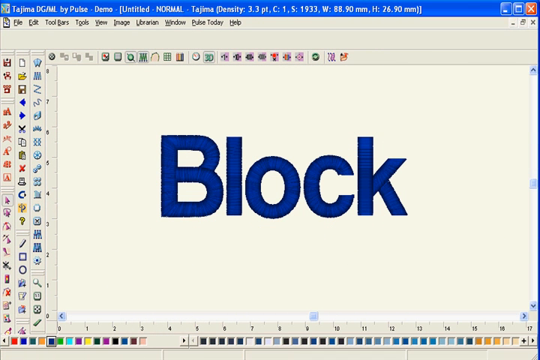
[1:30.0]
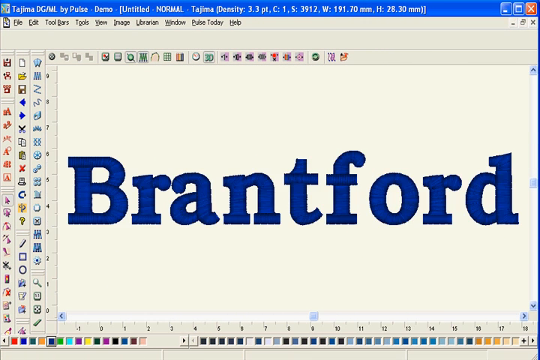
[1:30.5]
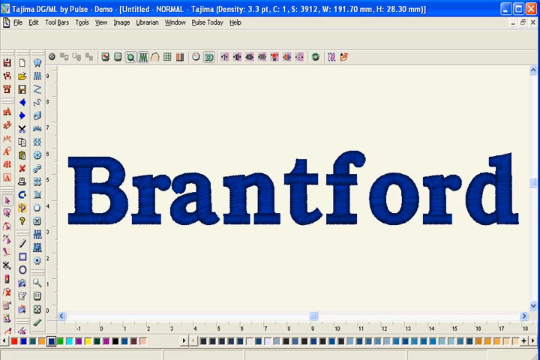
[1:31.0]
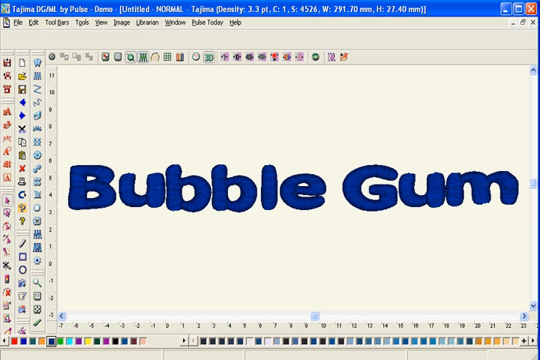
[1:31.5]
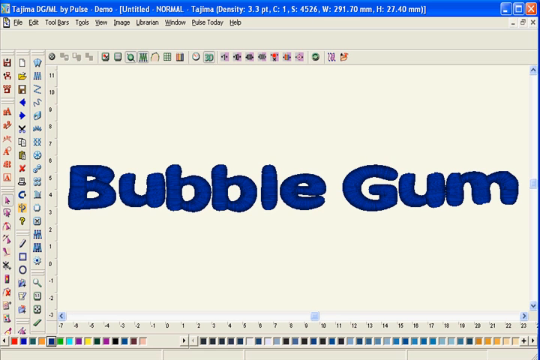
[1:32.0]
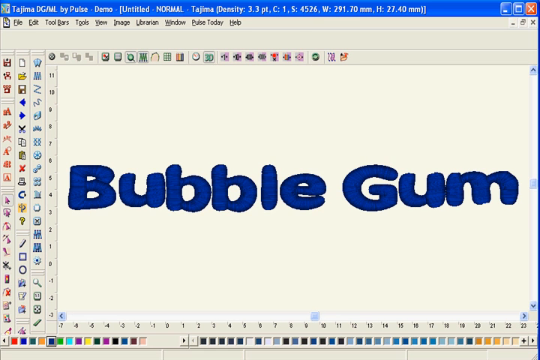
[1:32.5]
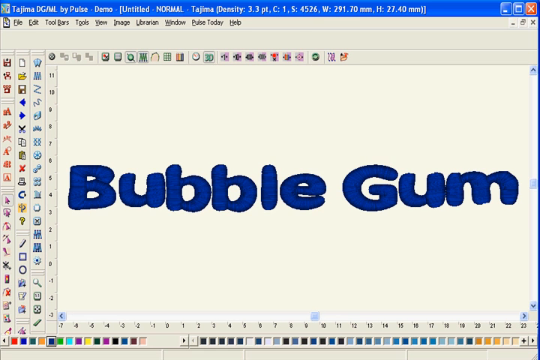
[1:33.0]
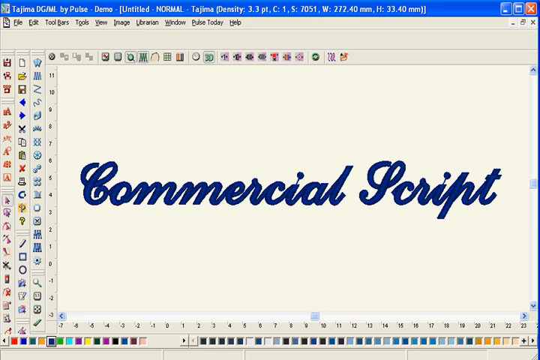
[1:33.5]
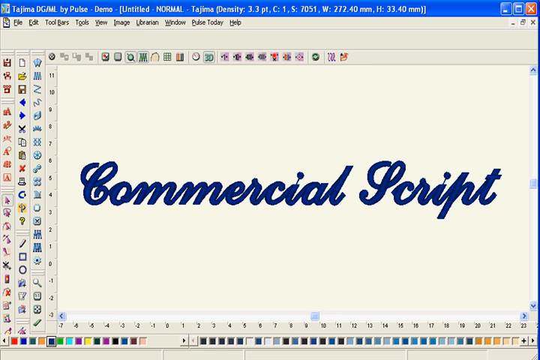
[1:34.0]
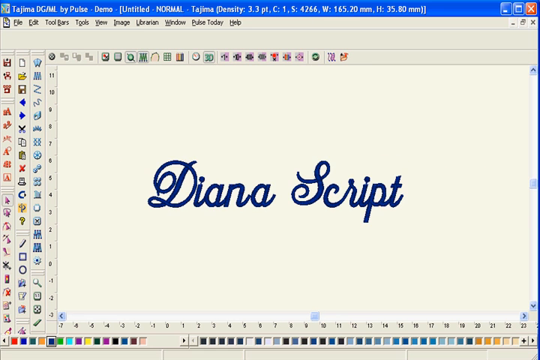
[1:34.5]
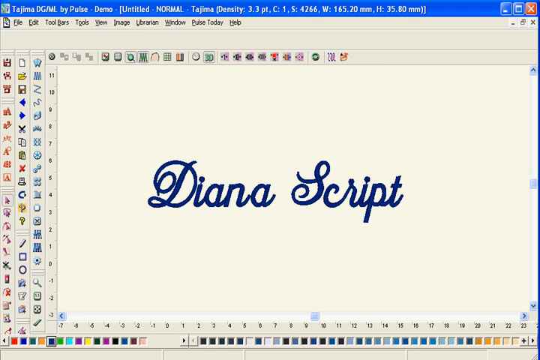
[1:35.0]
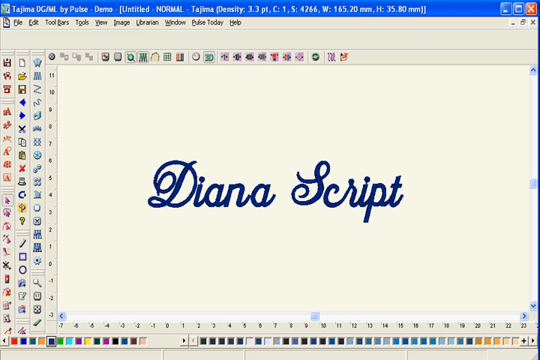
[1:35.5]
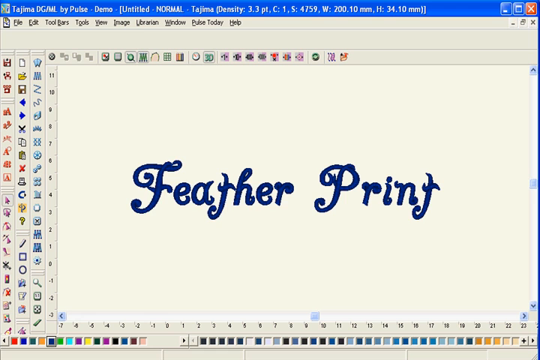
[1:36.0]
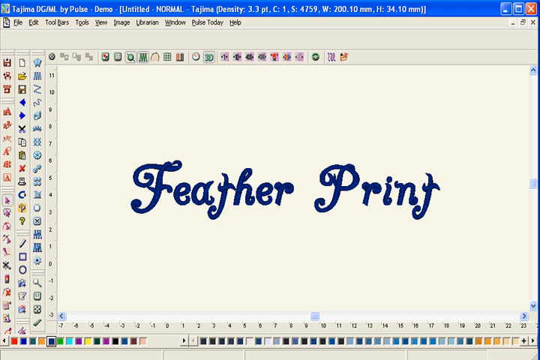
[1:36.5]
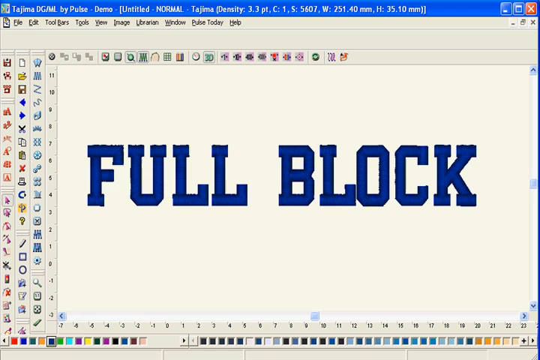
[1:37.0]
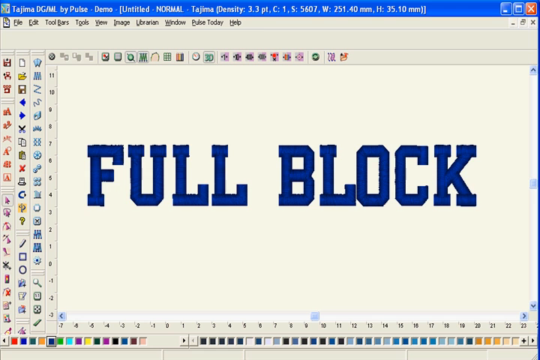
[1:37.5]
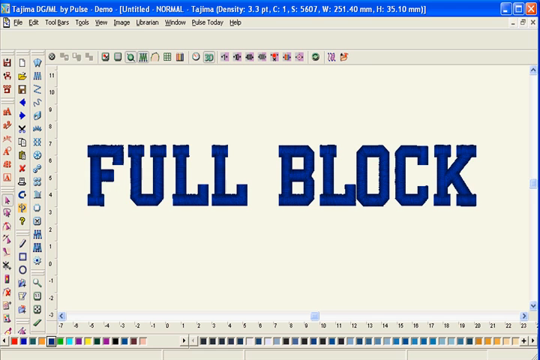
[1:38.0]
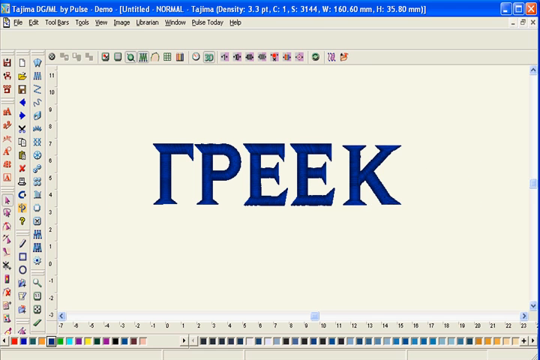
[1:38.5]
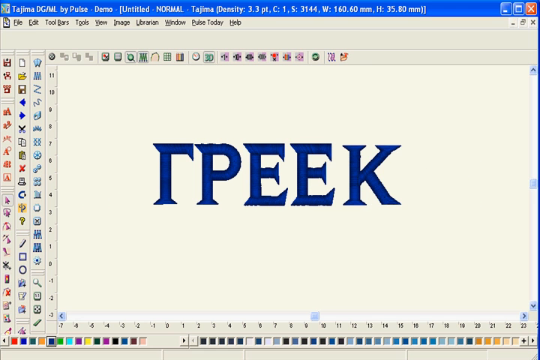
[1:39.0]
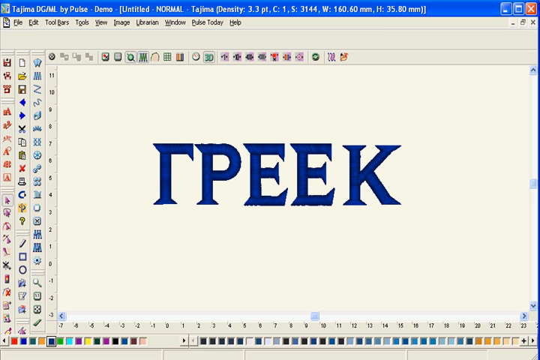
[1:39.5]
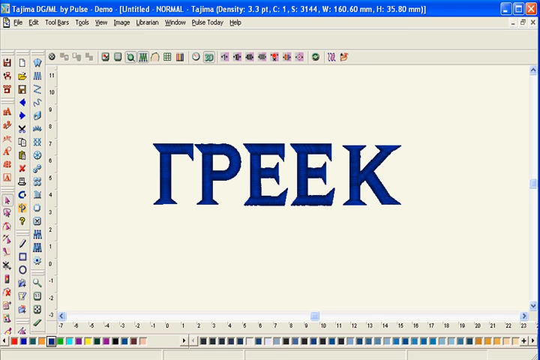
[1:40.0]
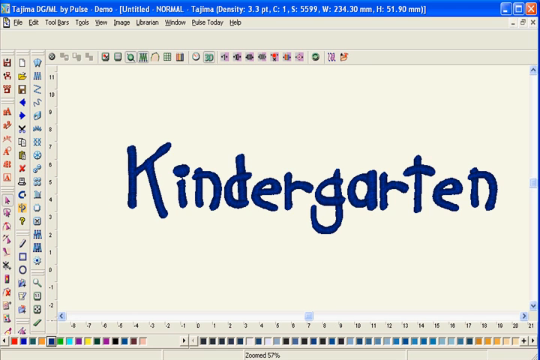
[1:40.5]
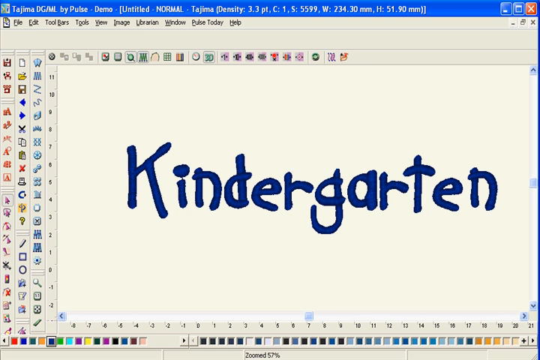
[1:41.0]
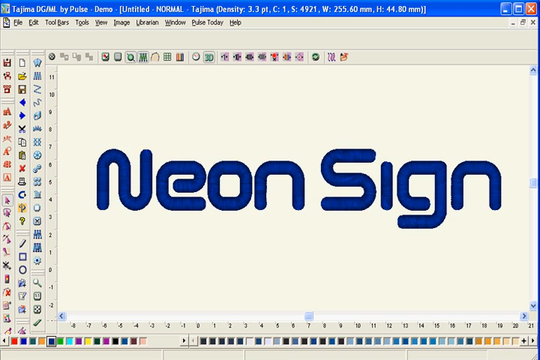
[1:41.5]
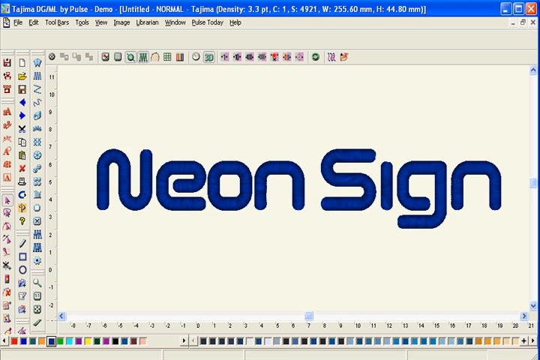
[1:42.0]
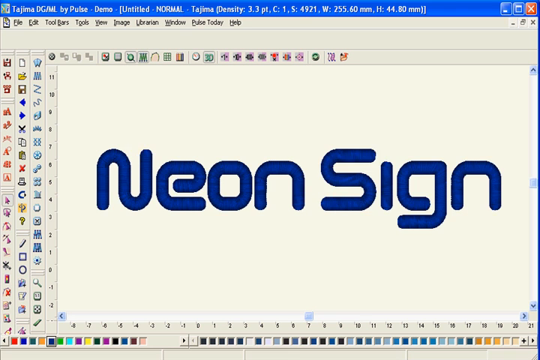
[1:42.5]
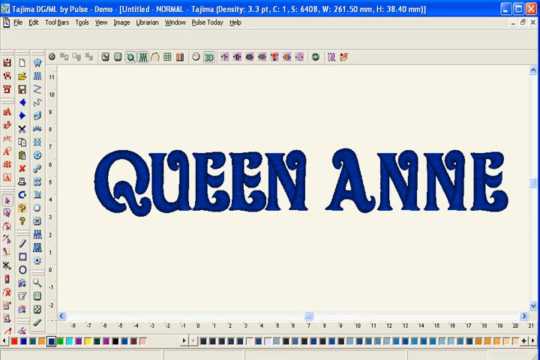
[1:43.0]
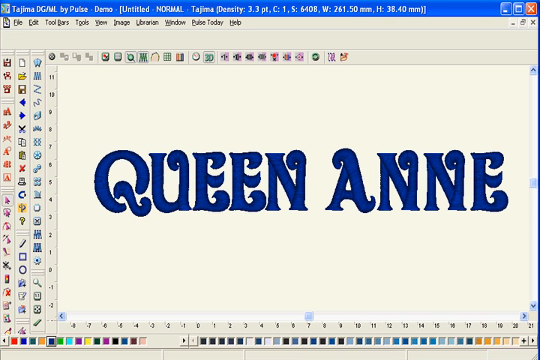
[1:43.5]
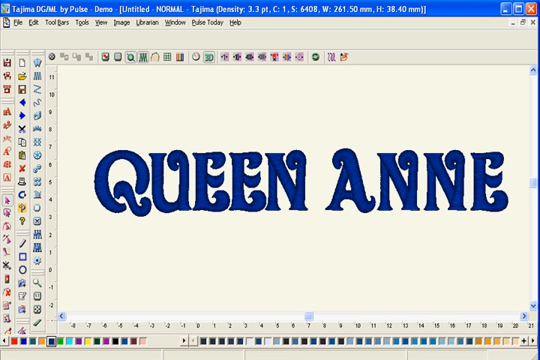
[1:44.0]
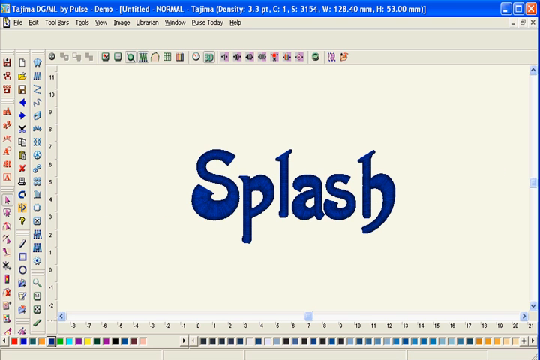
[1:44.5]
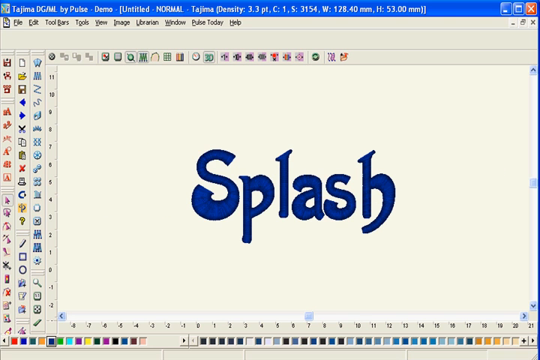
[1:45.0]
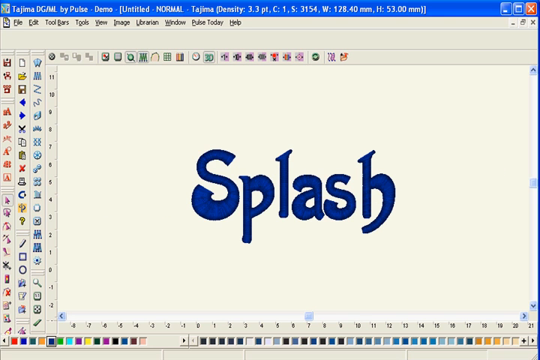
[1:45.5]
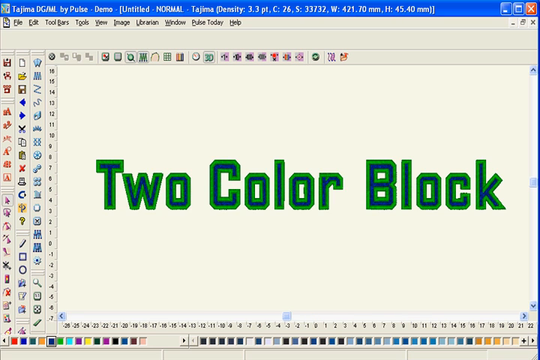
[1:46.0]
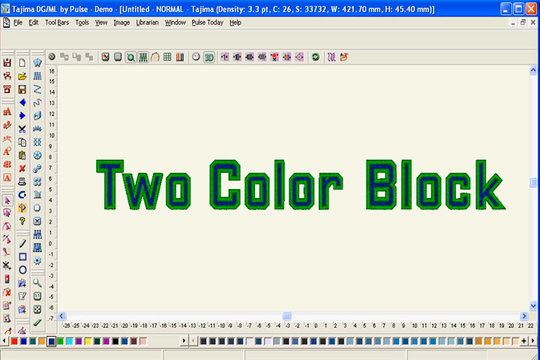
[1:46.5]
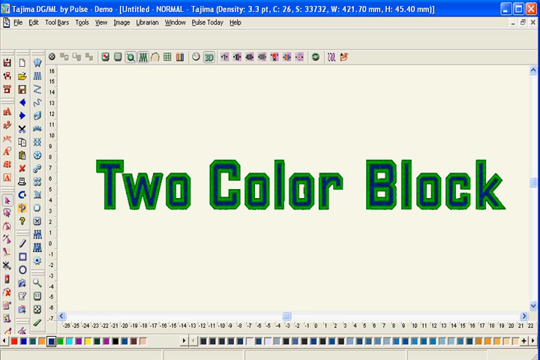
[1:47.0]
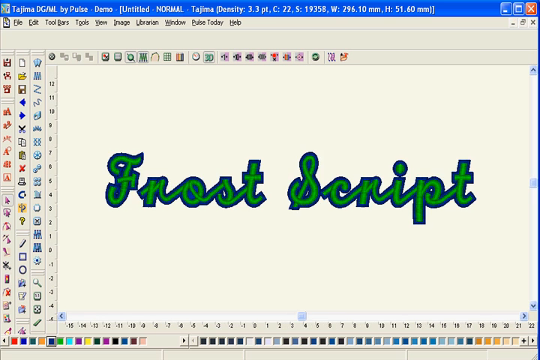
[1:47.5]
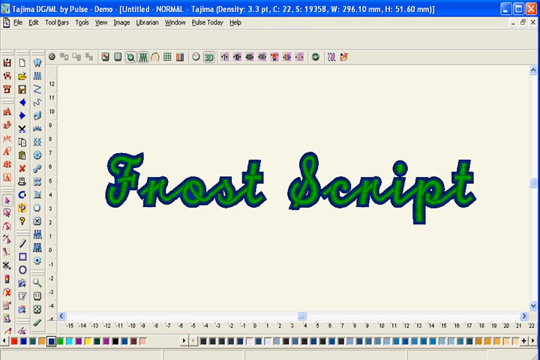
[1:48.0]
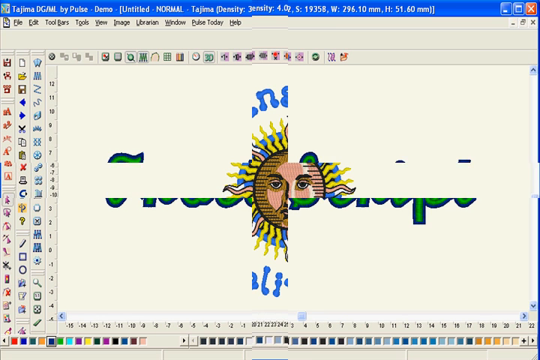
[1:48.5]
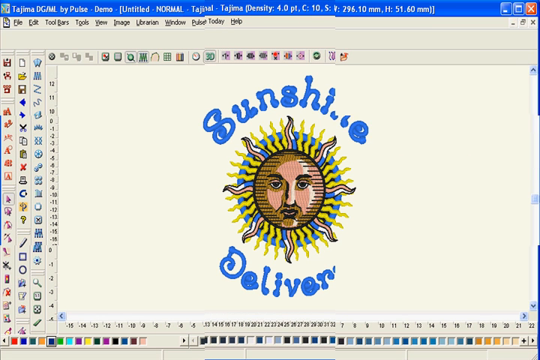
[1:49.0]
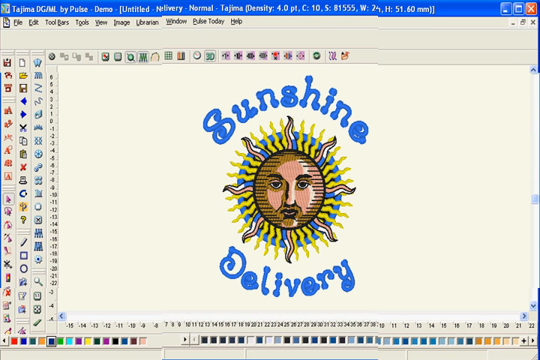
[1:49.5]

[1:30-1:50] A screen shows letters in what looks like a program for embroidering lettering on coats or shirts. It begins with "block," all in black letters. Then a series of font names appears on screen: "Brantford," "Bubblegum," "Commercial Site," "Diana Script," "Feather Print," "Full Block," "Tepeak," "Kindergarten," "Neon Sign," "Queen Anne," "Splash," "Two Color Block," "Frost Script," and "Sunshine Delivery." The Bubblegum letters look somewhat fluffy and bubbly. Diana Script looks almost cursive and very fancy. Feather Print letters look somewhat flowy and feathery. Full Block uses big block letters set very close together. Tepeak looks somewhat pointy, Kindergarten looks as if written by a kindergartner, Queen Anne looks beautiful, and Splash looks like it has water on it. The fonts continue in this way.